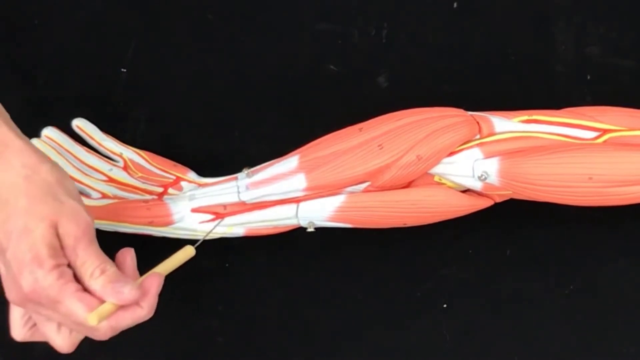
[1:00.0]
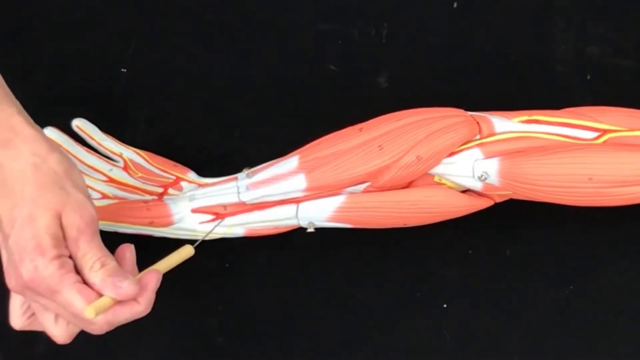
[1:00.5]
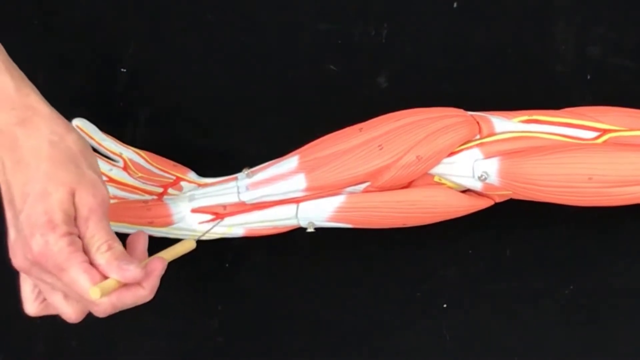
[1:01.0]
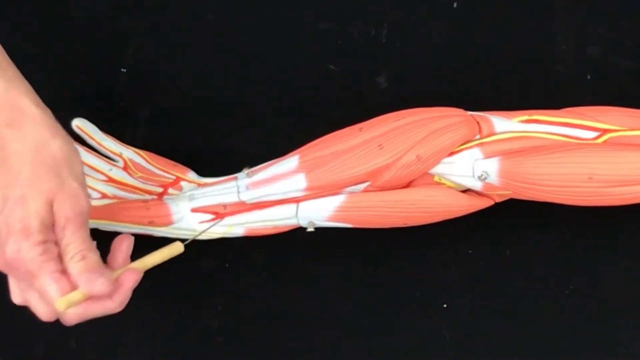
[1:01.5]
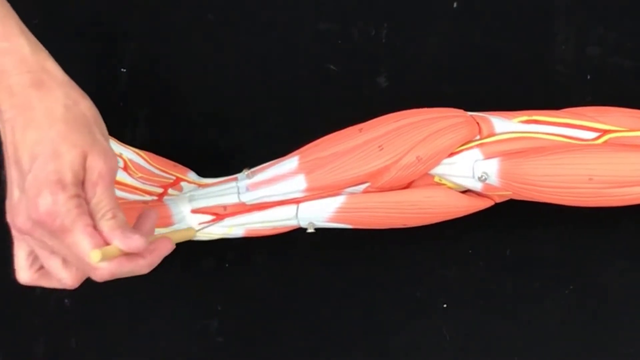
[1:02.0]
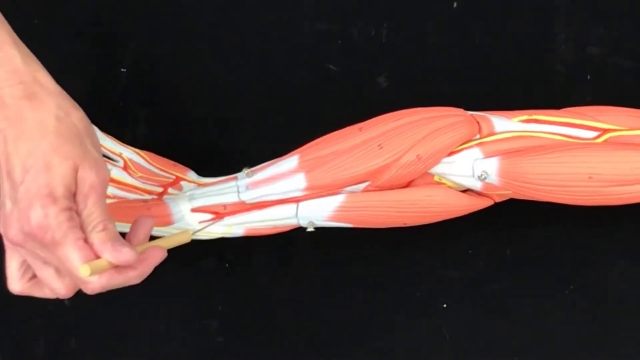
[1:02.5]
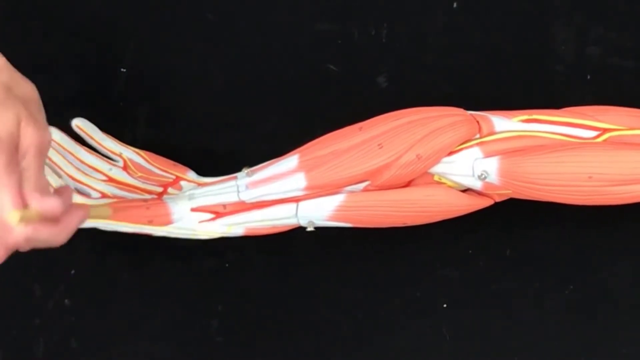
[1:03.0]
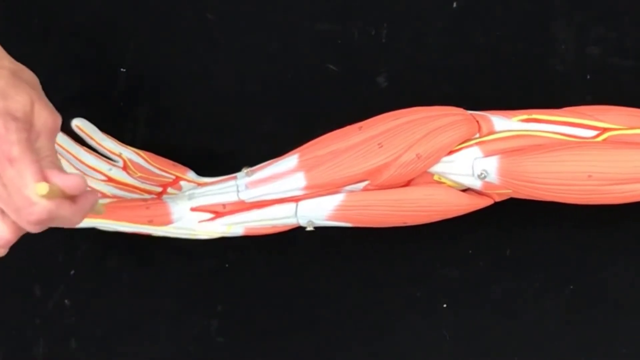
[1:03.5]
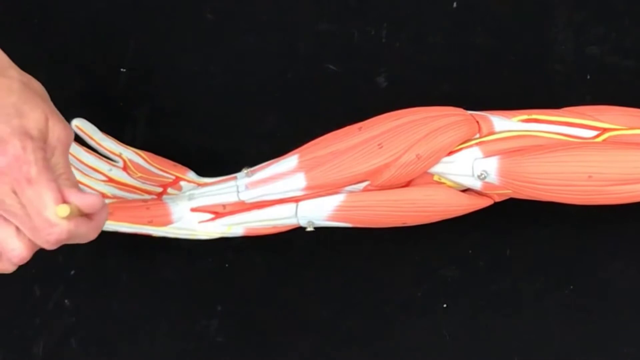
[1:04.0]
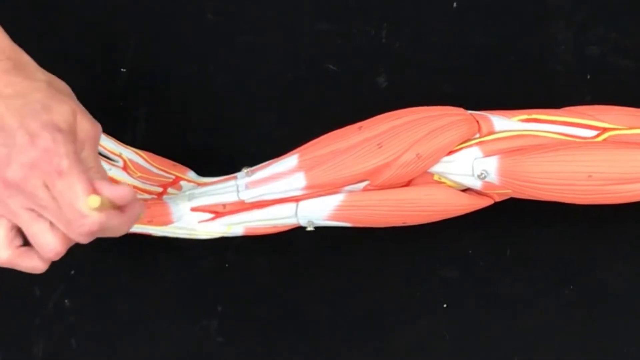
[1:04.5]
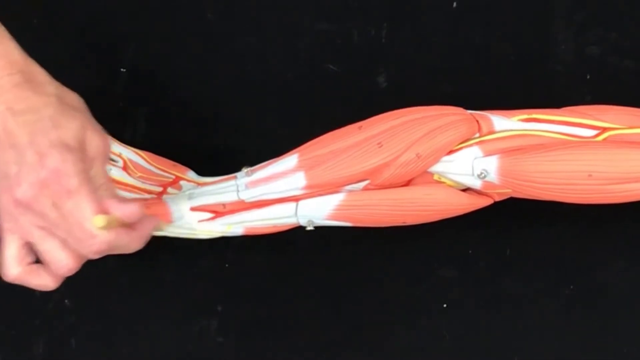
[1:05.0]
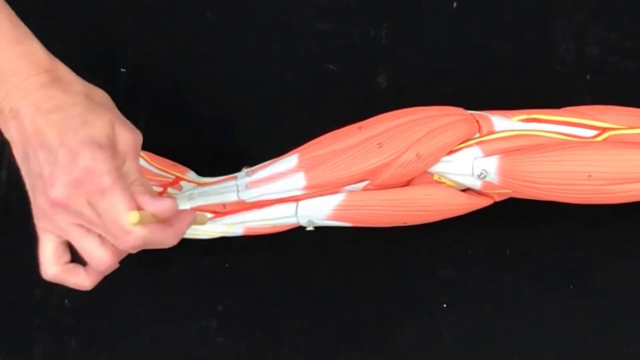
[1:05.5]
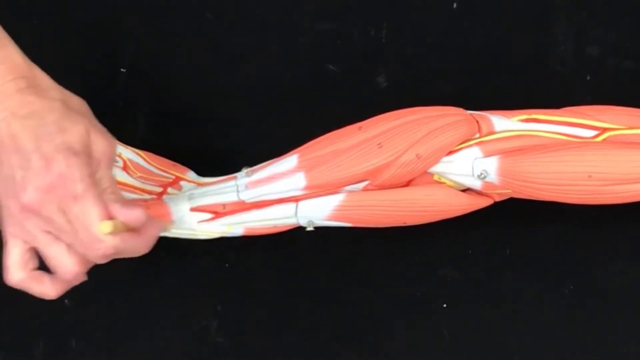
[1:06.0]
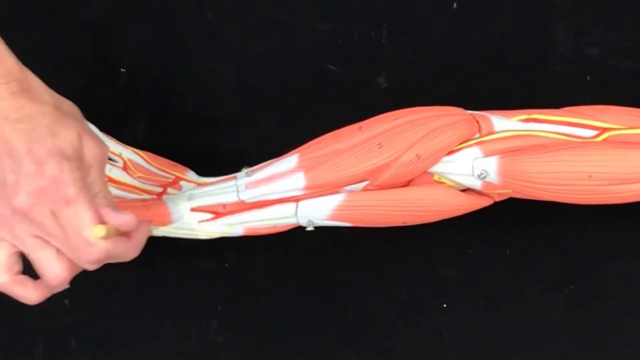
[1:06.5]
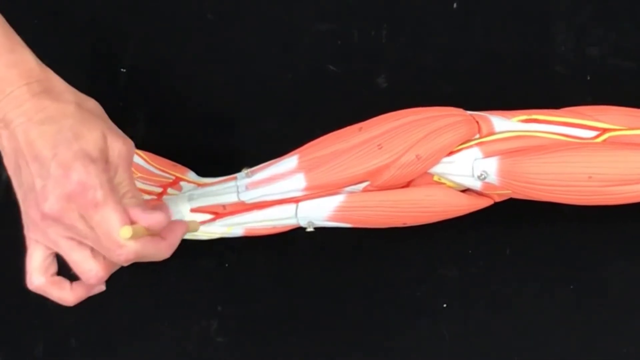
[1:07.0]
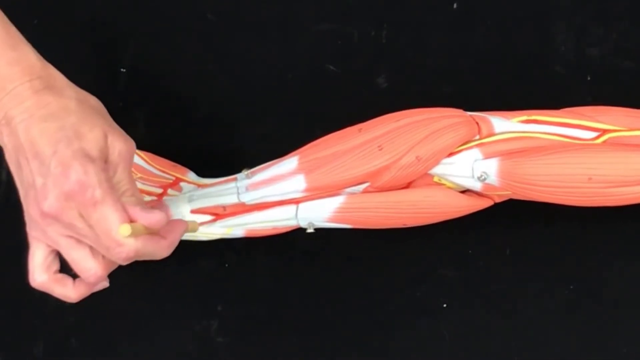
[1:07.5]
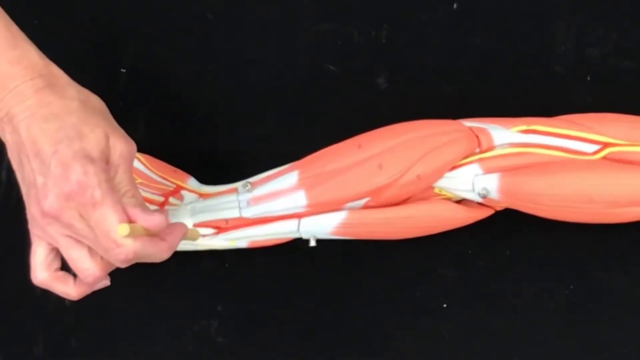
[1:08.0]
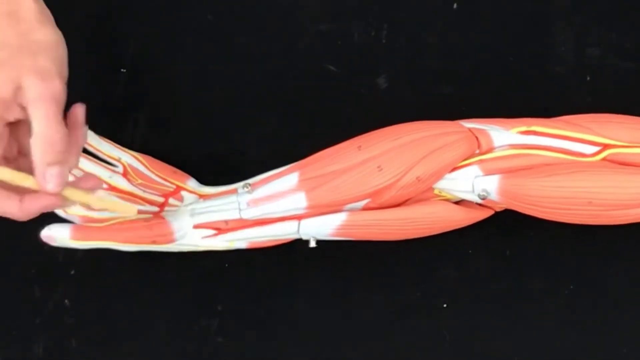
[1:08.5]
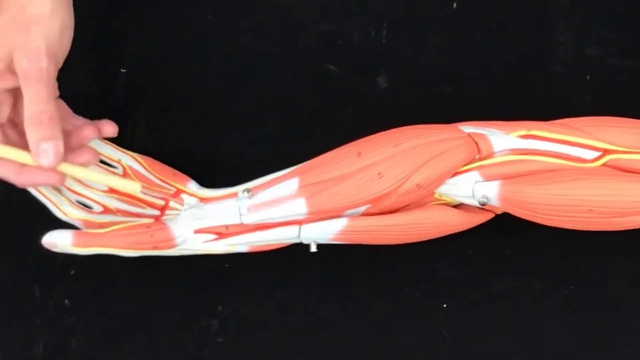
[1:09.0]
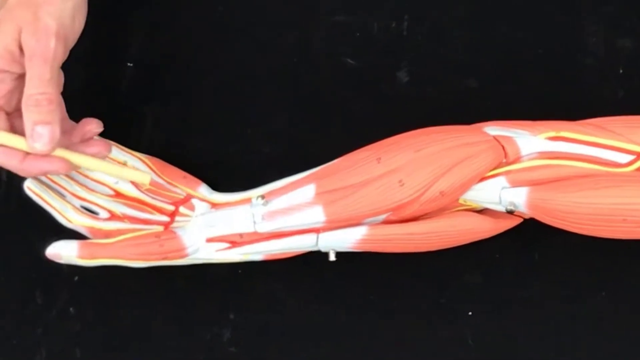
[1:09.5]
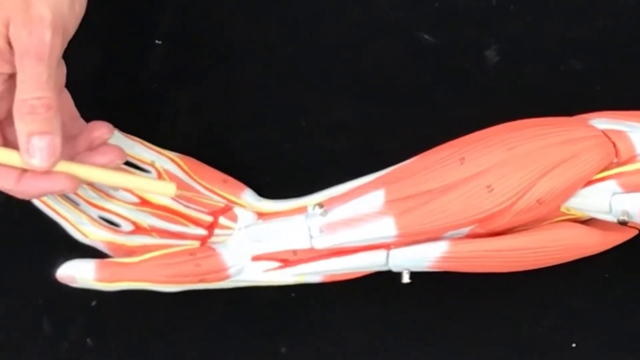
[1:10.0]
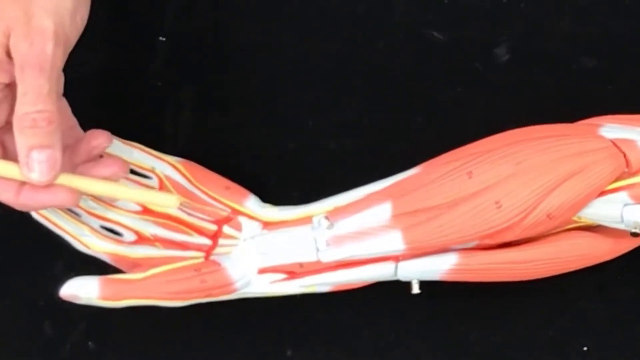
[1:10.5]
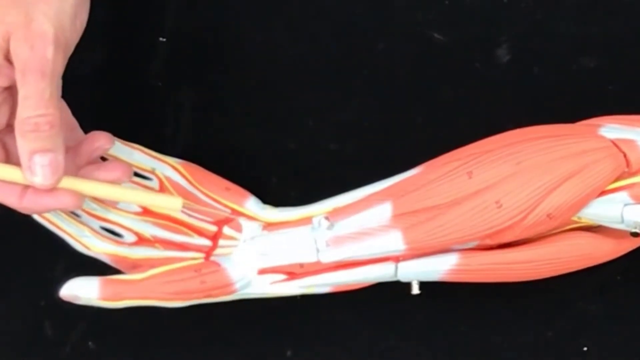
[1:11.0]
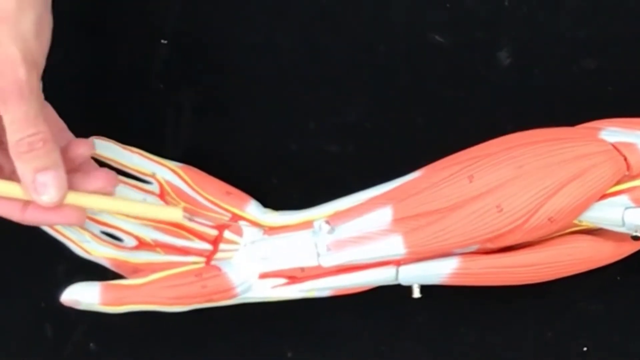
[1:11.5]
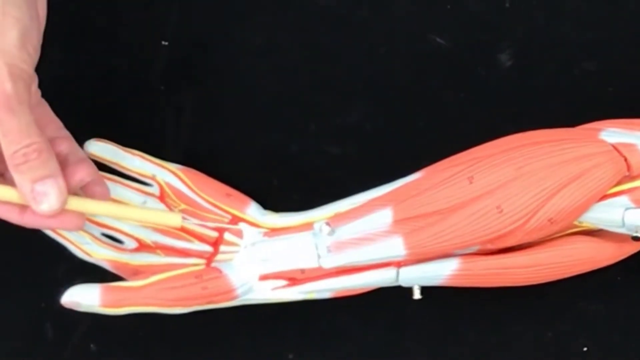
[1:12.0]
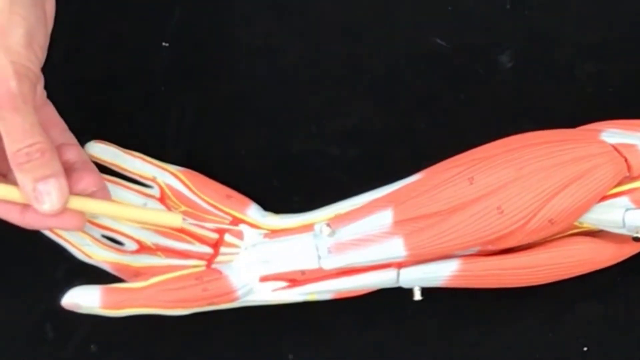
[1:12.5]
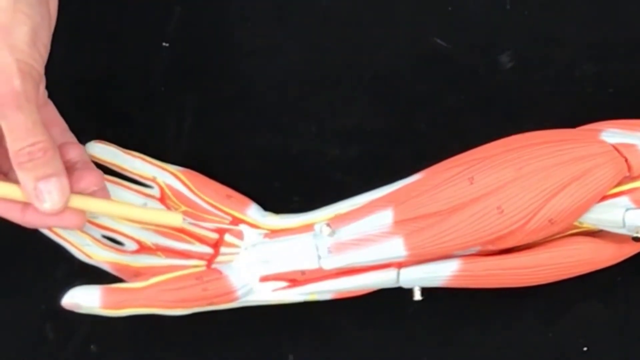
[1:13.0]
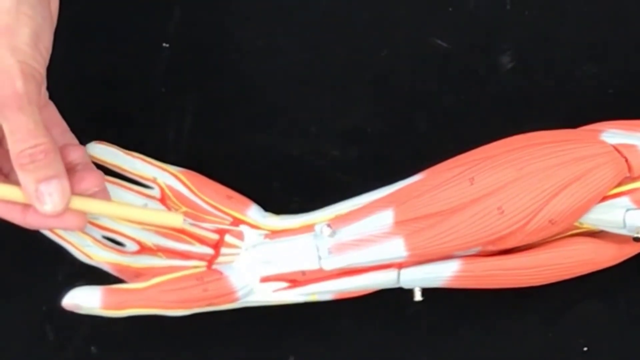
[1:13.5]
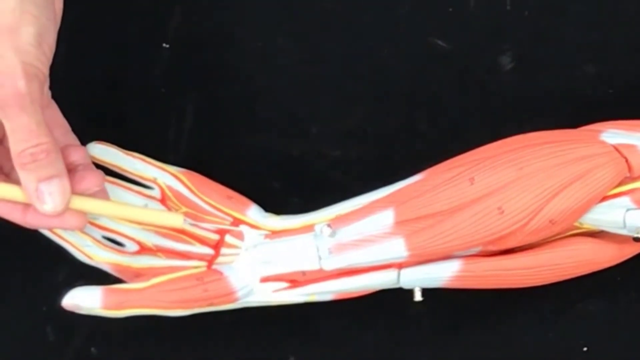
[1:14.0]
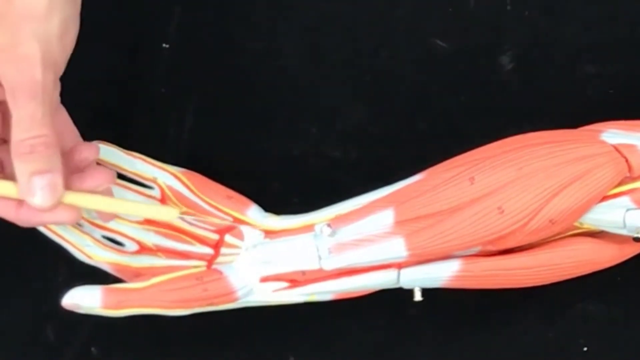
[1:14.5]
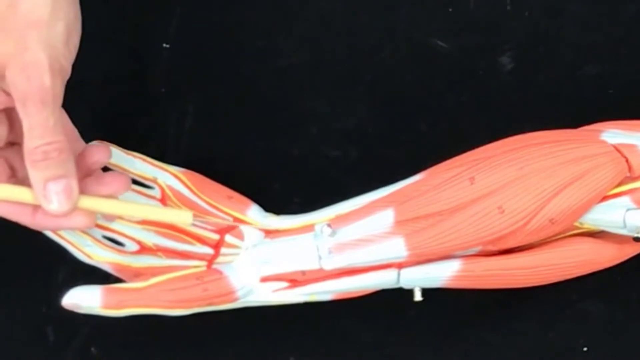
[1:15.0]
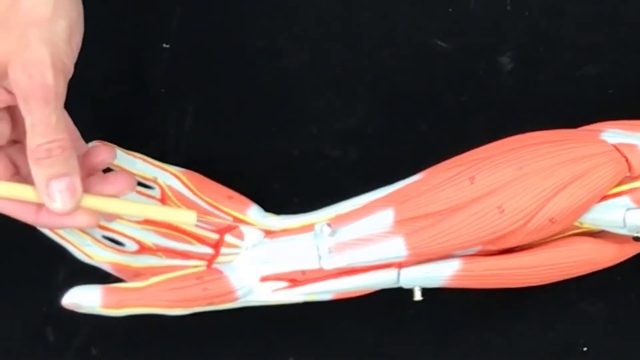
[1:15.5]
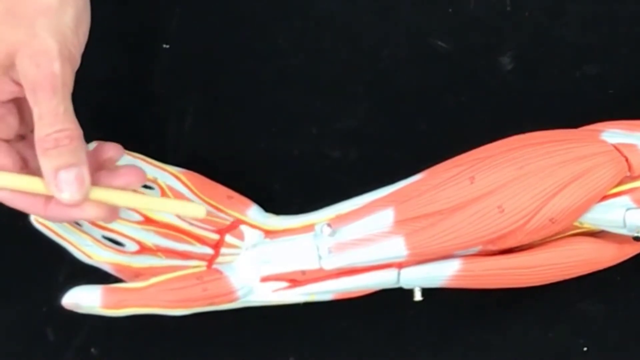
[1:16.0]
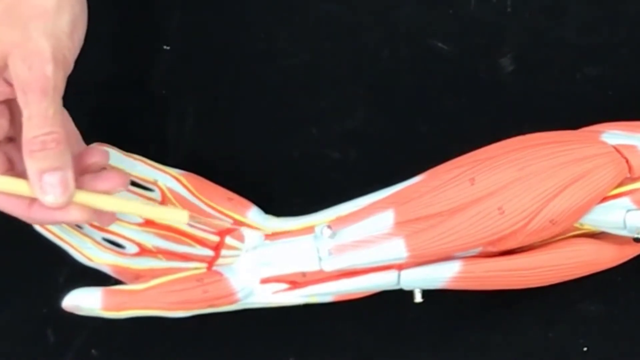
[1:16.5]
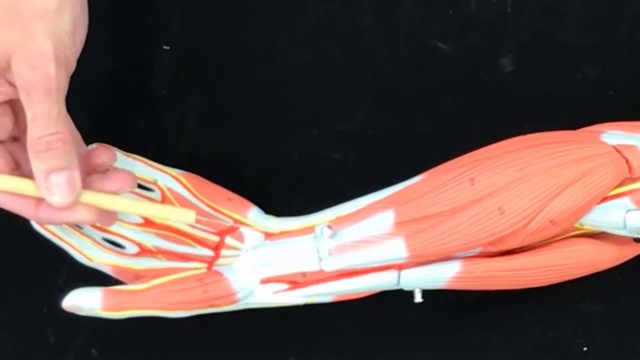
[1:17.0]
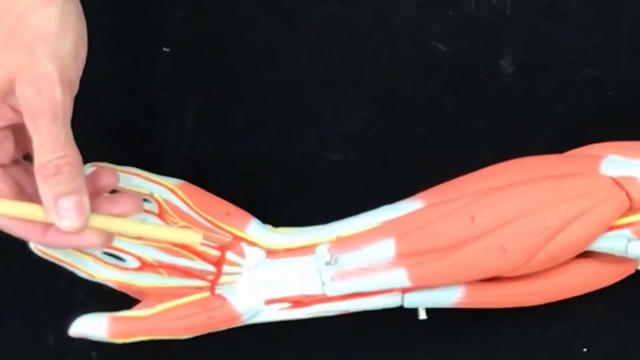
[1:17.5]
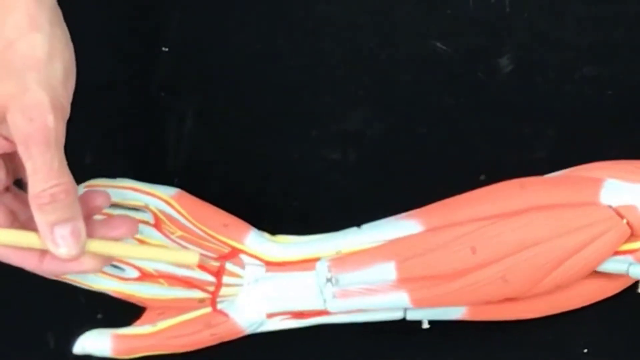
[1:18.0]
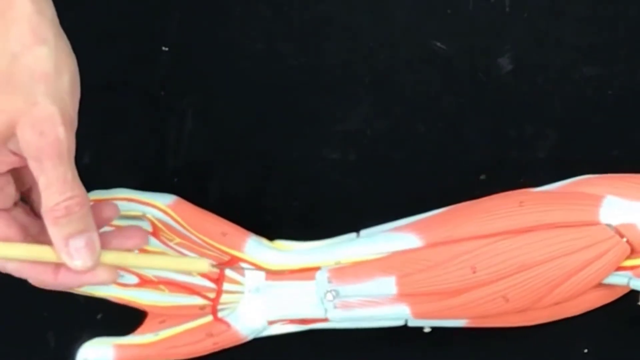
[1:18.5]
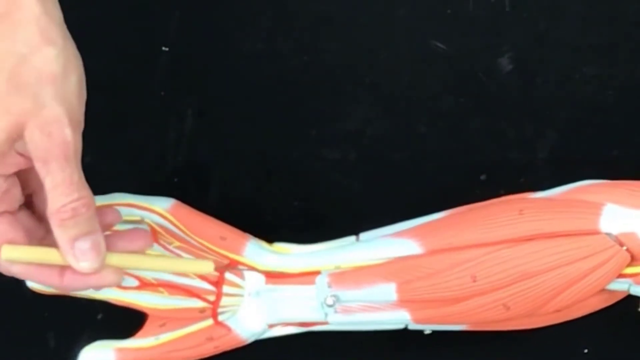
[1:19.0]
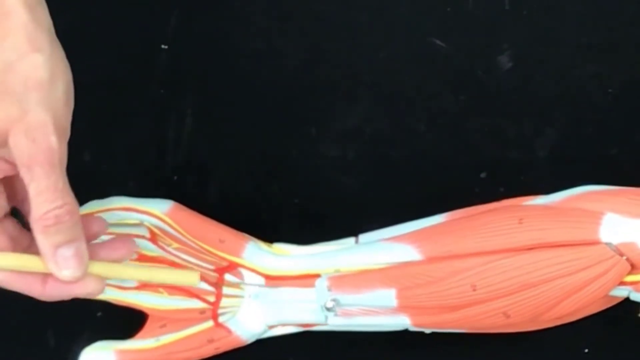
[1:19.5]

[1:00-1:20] The pointer is brought down to the wrist and points at something underneath the thumb on that side of the arm model. She moves the pointer back and forth from the thumb, then rolls the model's hand onto its back and points at the part of the wrist where the large artery apparently comes up to the juncture of the wrist and hand. She appears to be tracing the main artery down the arm: at the inner elbow it tucks between the top and bottom muscle masses of the lower arm, continues down to below the thumb, and then comes around into the juncture of the wrist and hand.